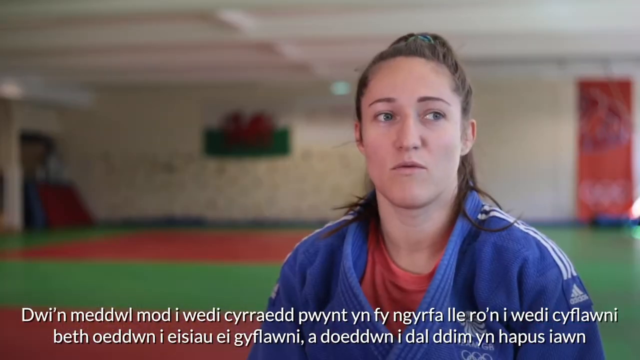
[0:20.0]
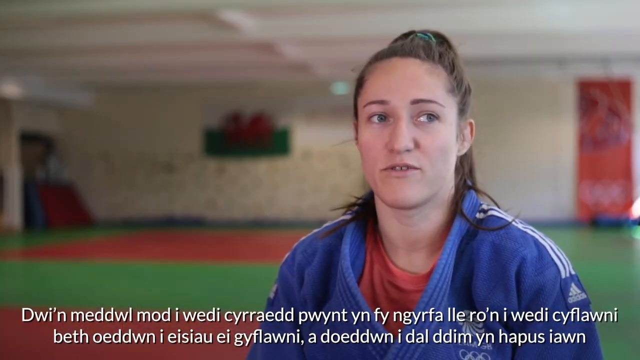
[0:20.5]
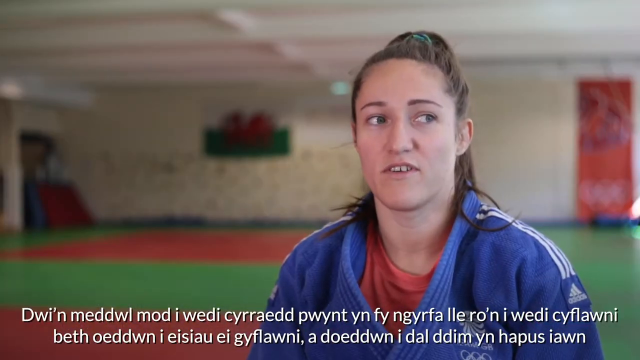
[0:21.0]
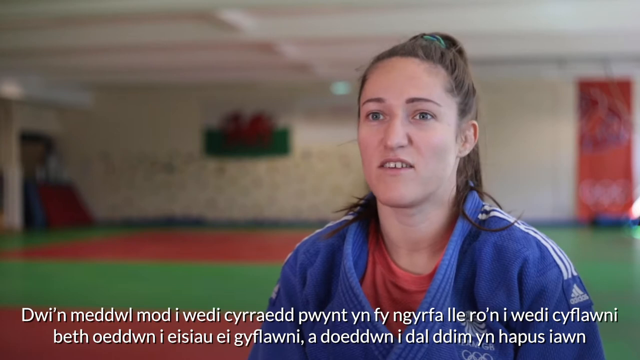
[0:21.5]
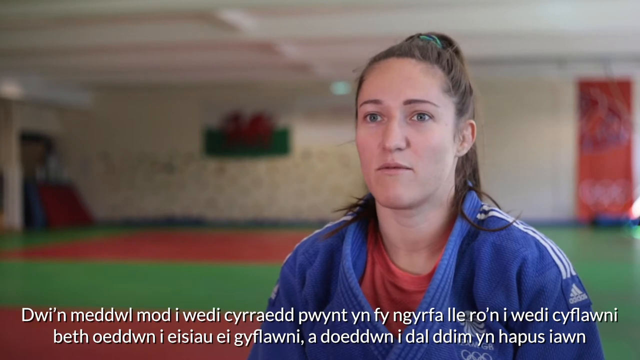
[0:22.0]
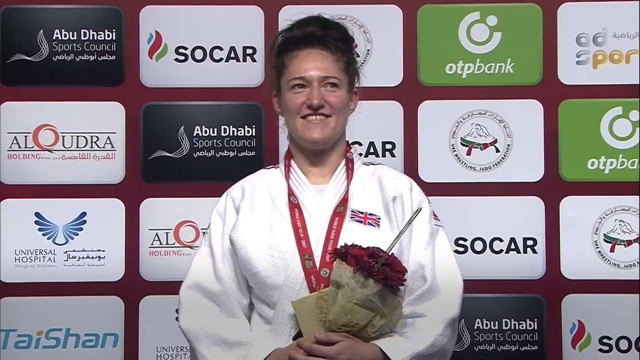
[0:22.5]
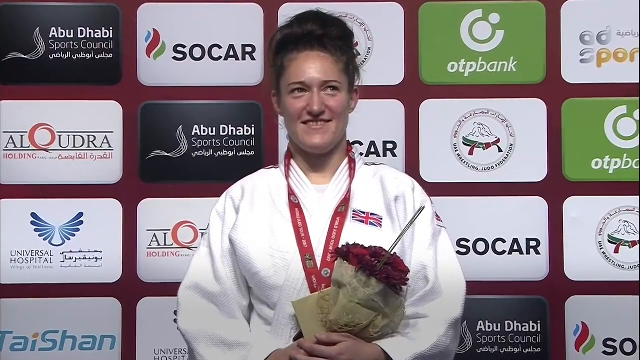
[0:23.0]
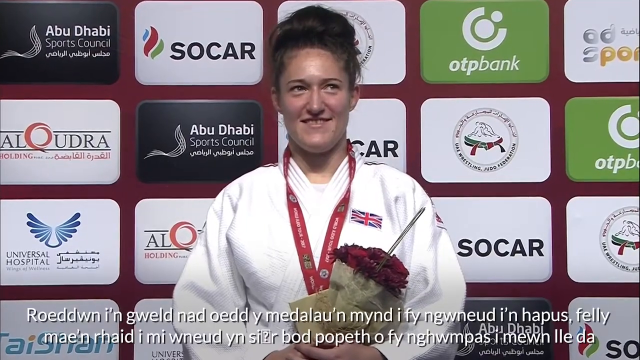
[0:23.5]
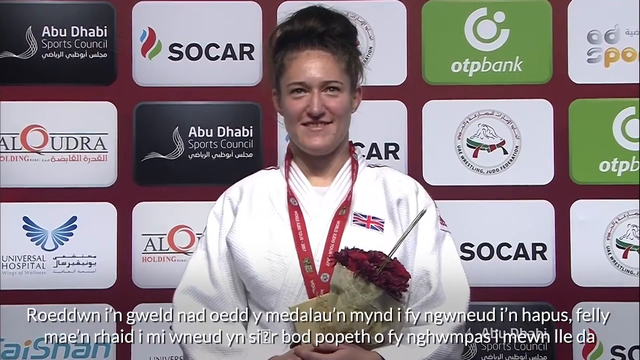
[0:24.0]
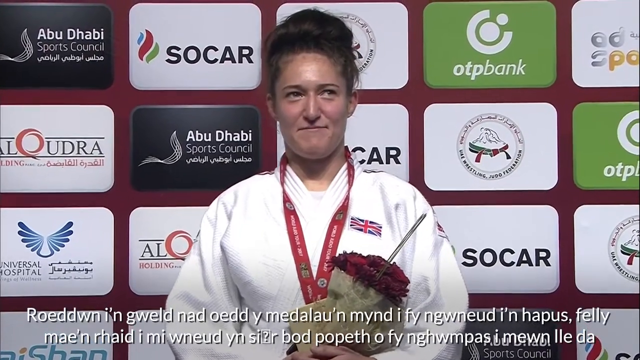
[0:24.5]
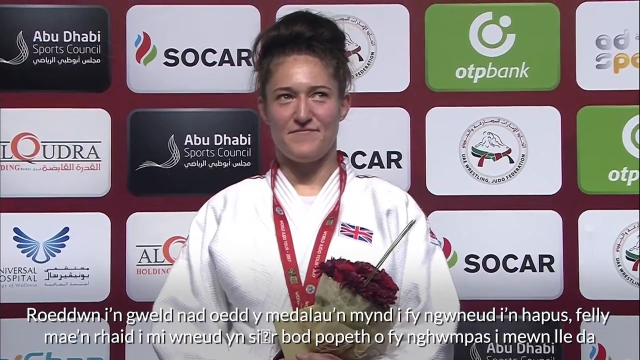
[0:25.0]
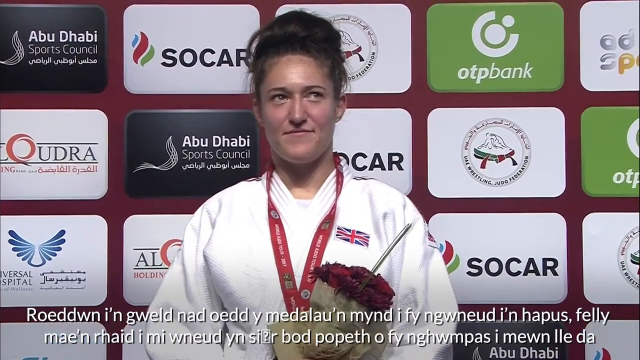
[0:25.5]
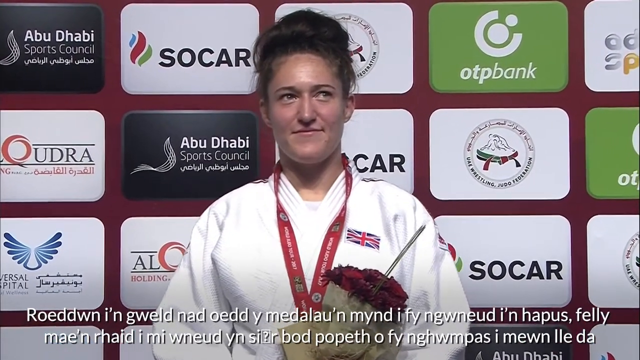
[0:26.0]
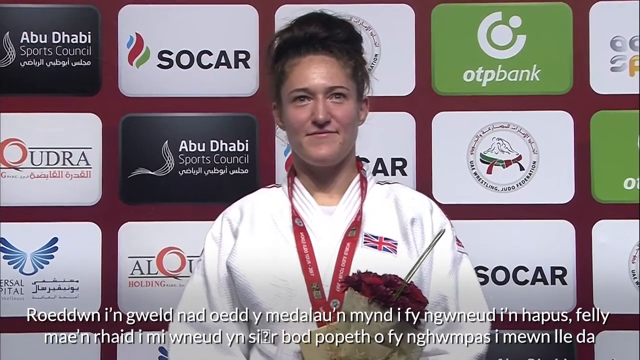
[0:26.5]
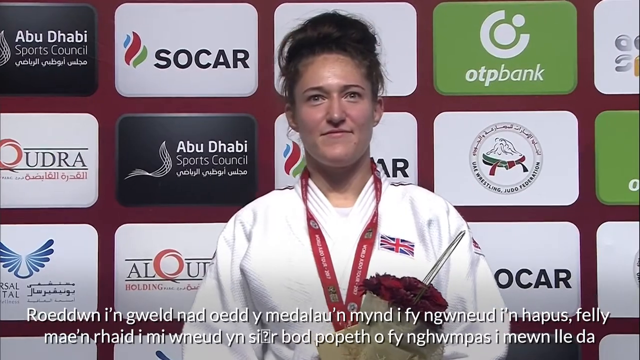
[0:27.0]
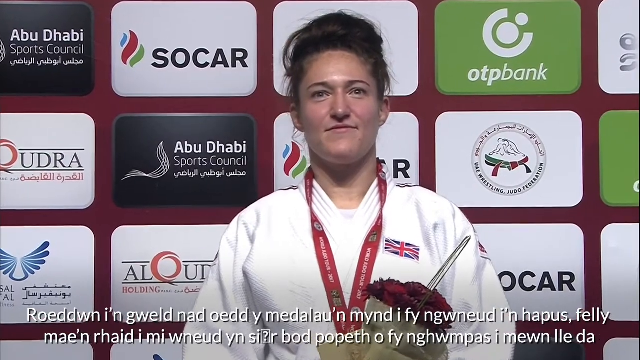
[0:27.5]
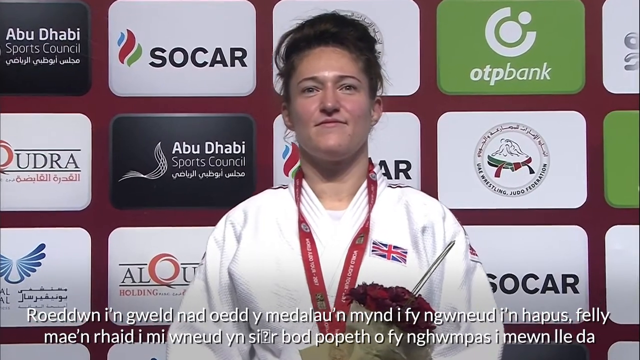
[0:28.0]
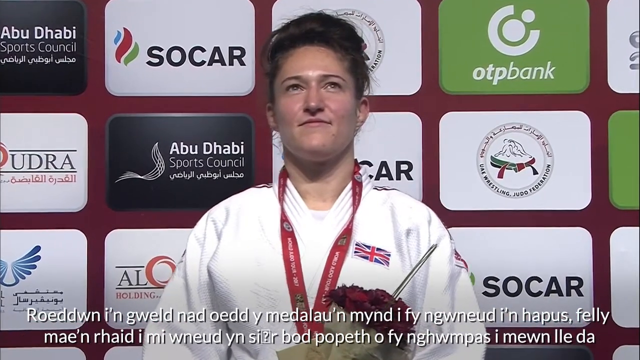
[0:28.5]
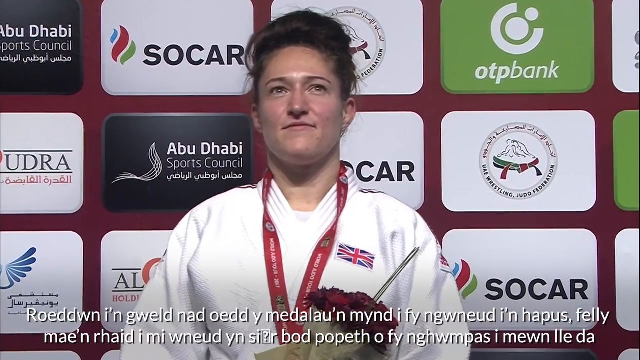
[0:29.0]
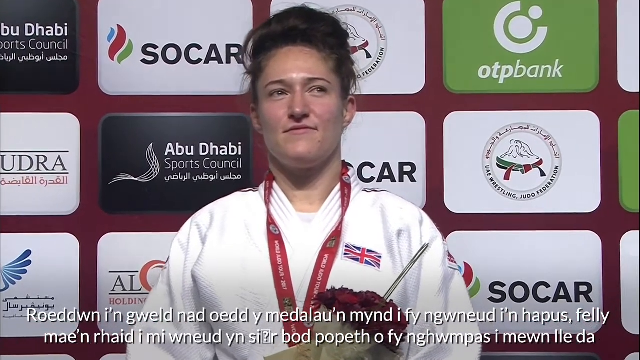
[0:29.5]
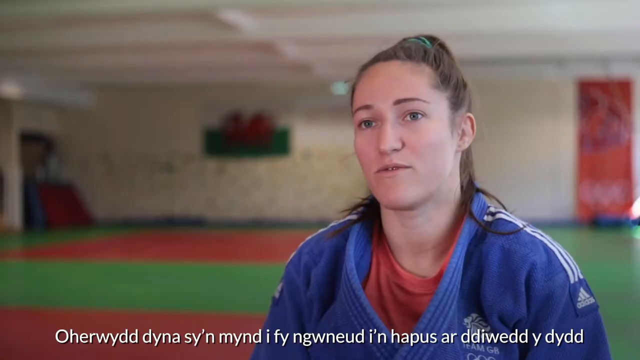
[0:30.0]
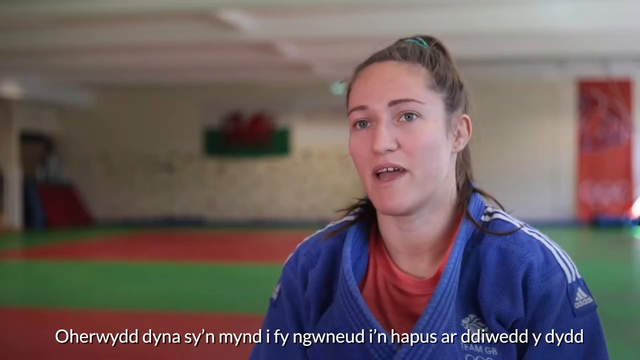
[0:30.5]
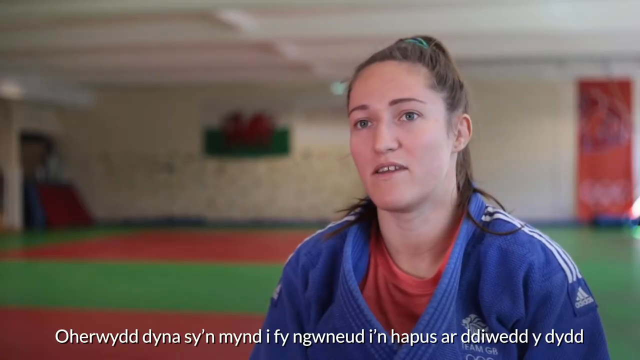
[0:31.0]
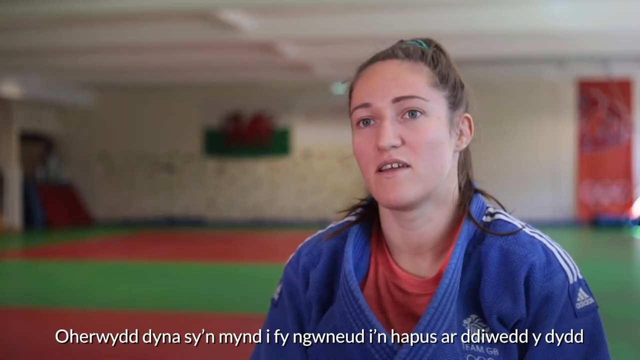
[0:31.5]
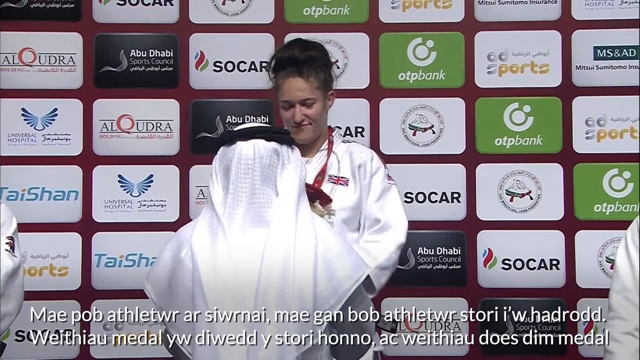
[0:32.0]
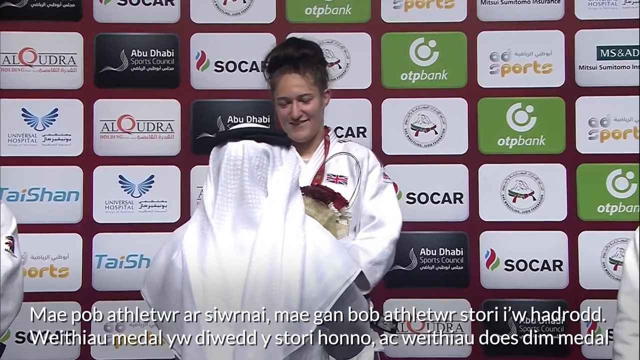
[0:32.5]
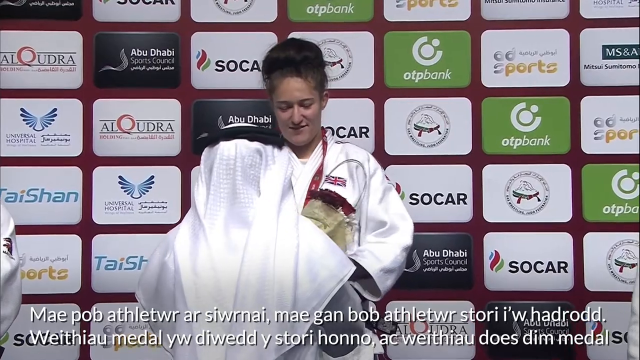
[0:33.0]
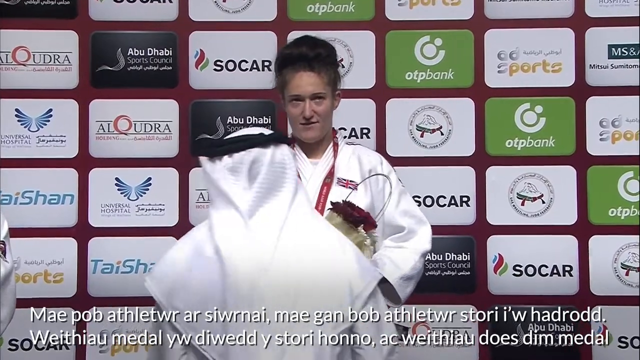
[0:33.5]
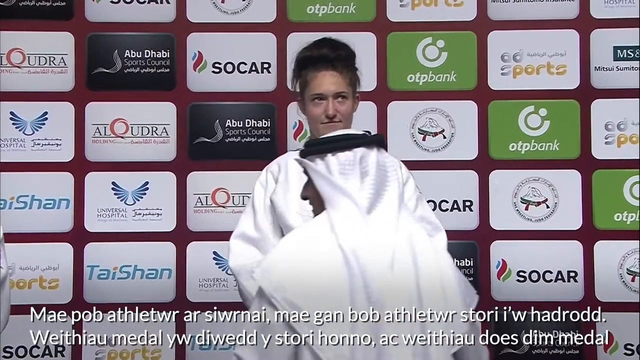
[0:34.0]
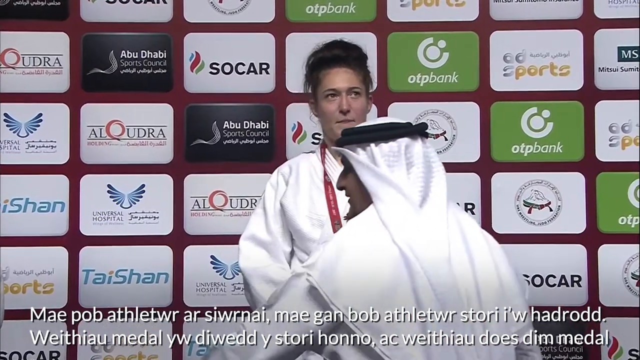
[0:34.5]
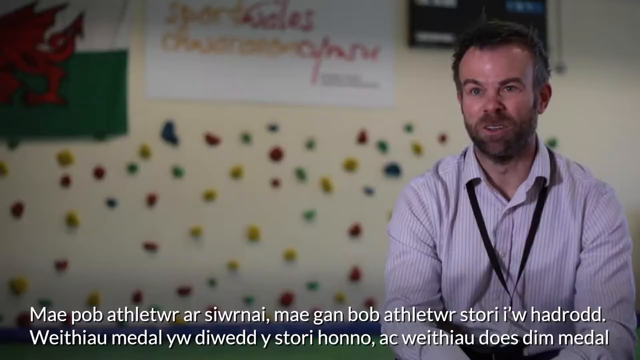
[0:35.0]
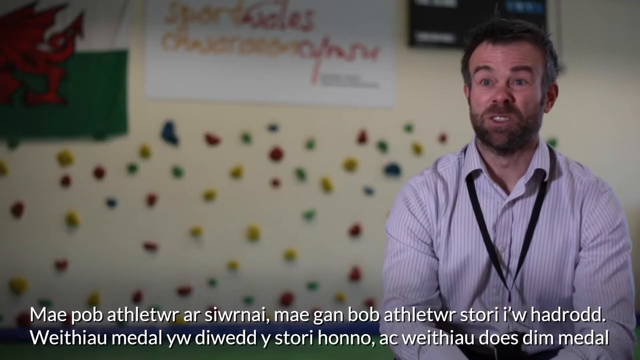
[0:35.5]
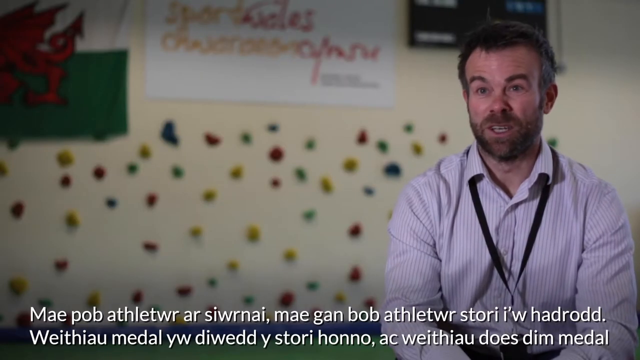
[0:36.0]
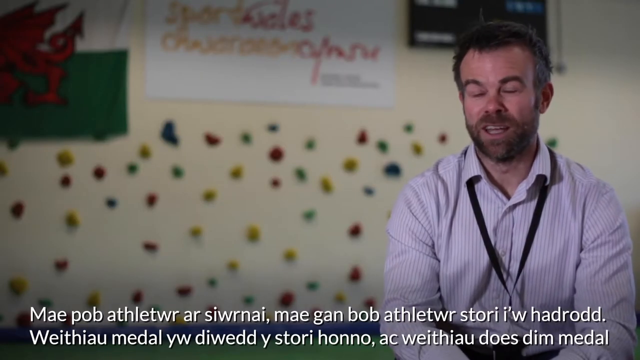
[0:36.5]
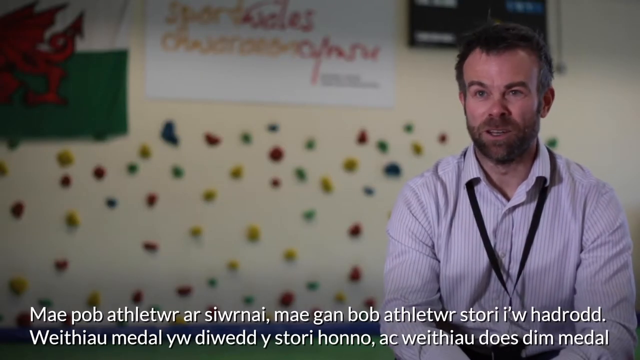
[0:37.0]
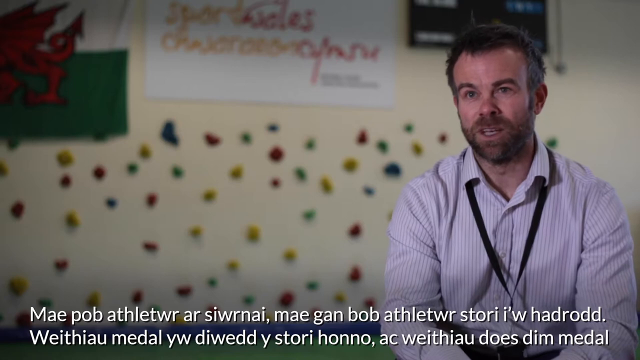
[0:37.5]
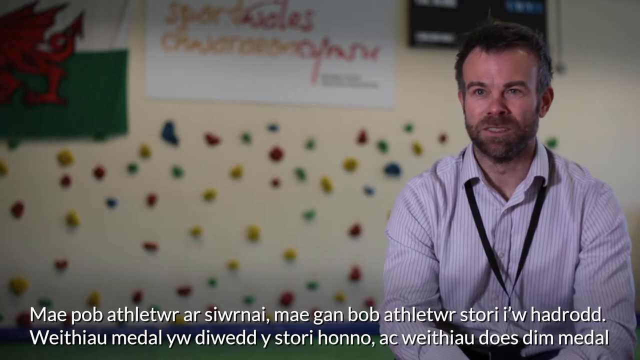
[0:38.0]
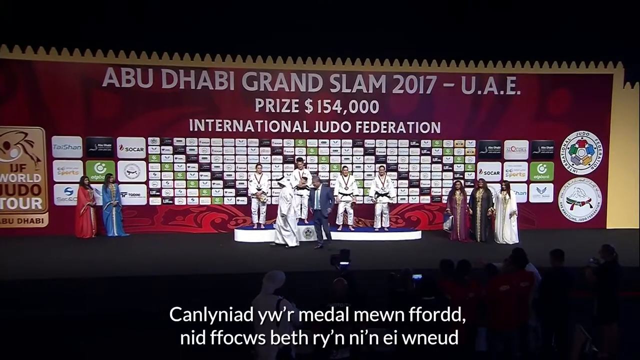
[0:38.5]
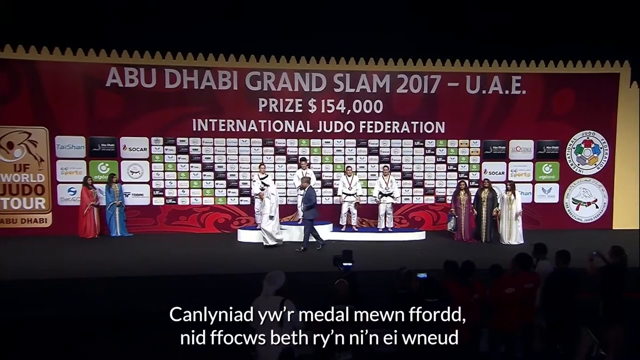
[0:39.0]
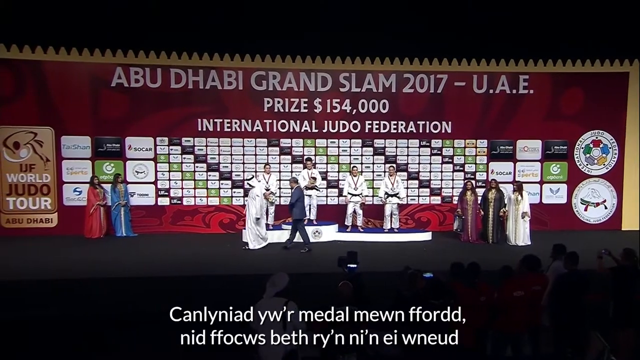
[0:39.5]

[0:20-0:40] A woman, a player, talks to the audience. Behind her is the text "Abu Dhabi Sports Center". She stands on the highest position of the podium holding up a bouquet of flowers, having won her match, and she is happy and proud. Text reads "Abu Dhabi Grand Slam", with a grand prize of $154,000.